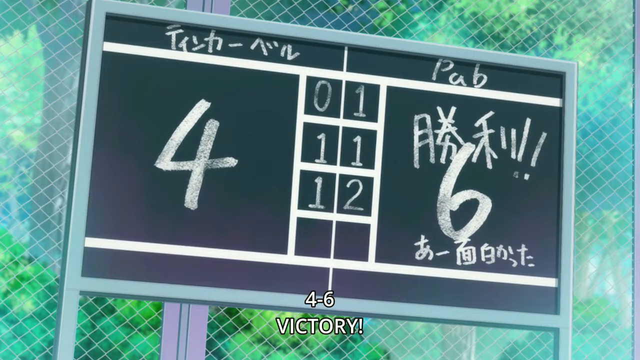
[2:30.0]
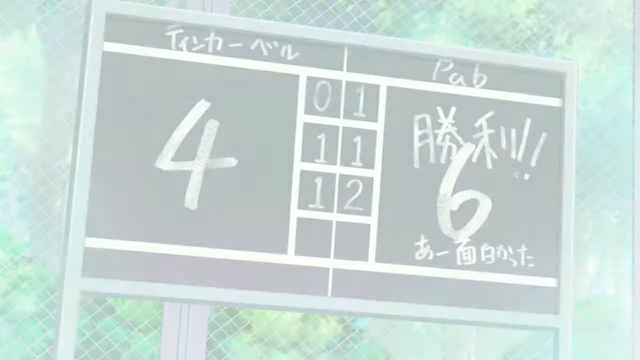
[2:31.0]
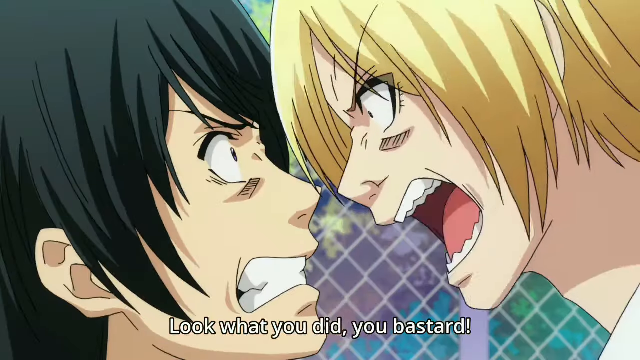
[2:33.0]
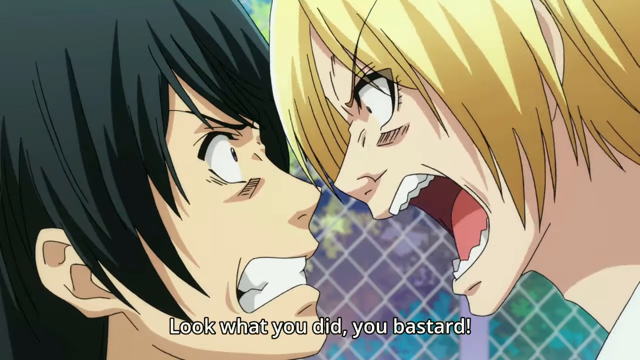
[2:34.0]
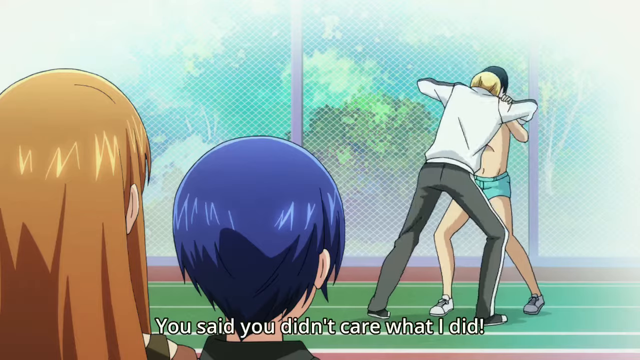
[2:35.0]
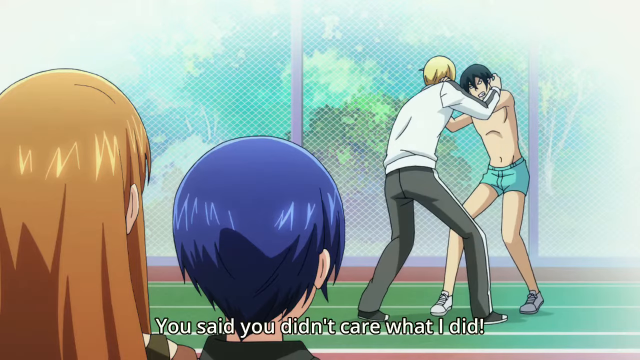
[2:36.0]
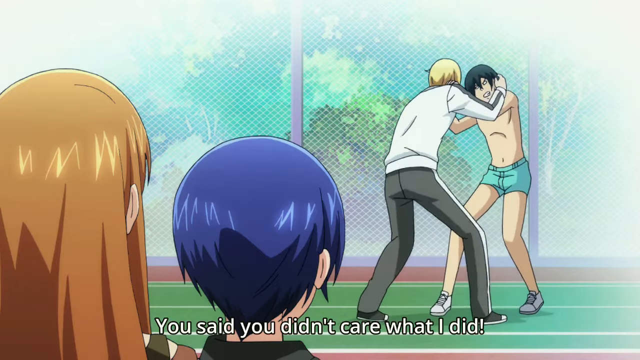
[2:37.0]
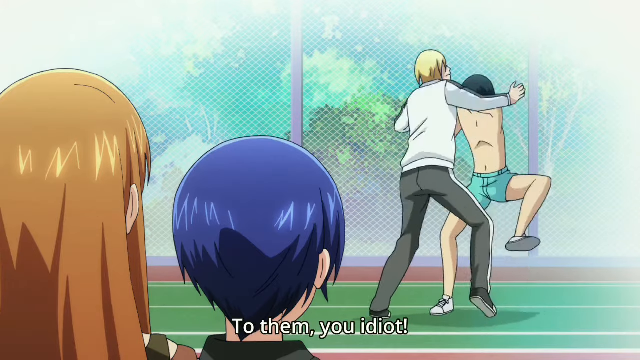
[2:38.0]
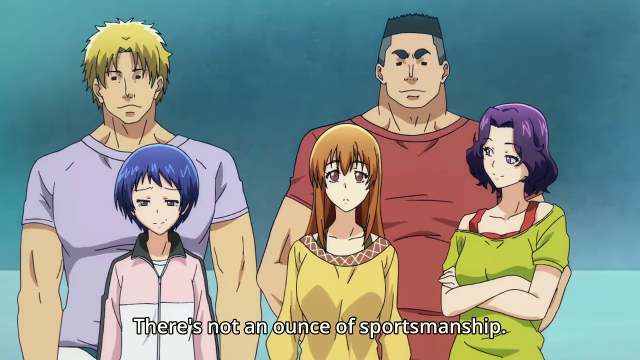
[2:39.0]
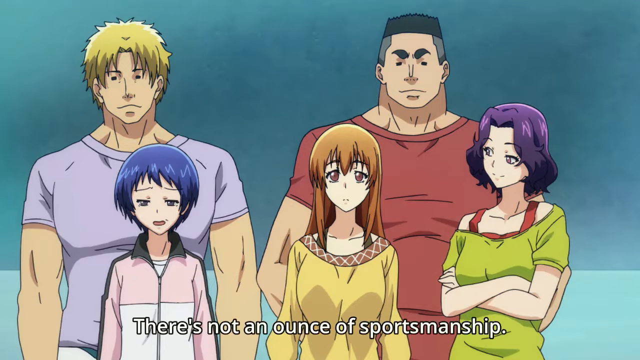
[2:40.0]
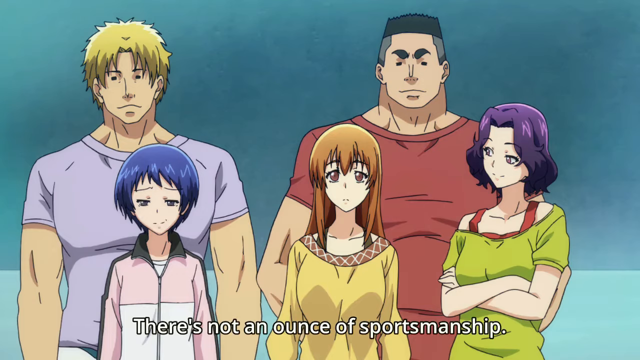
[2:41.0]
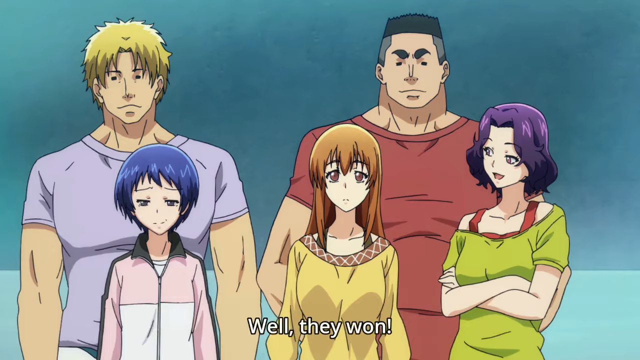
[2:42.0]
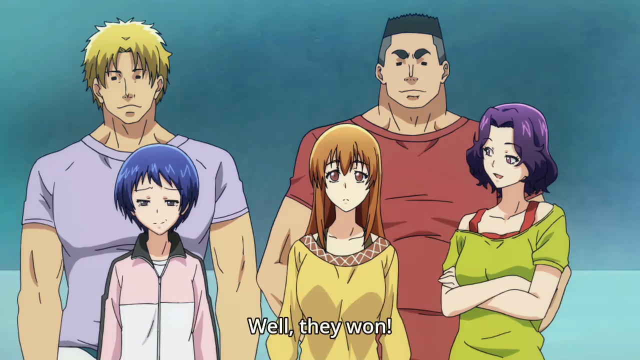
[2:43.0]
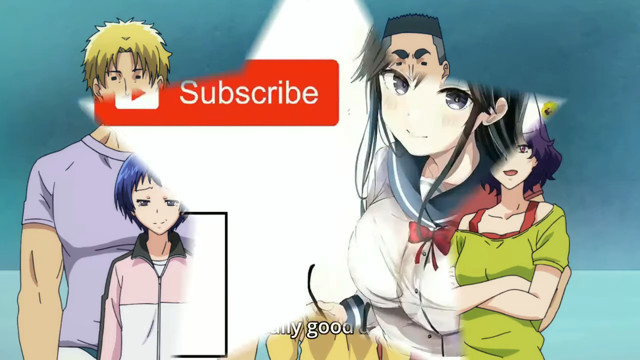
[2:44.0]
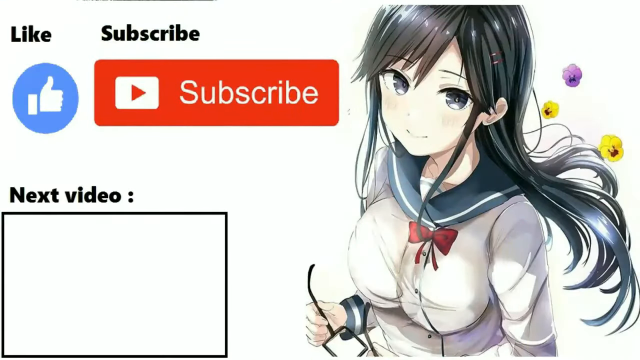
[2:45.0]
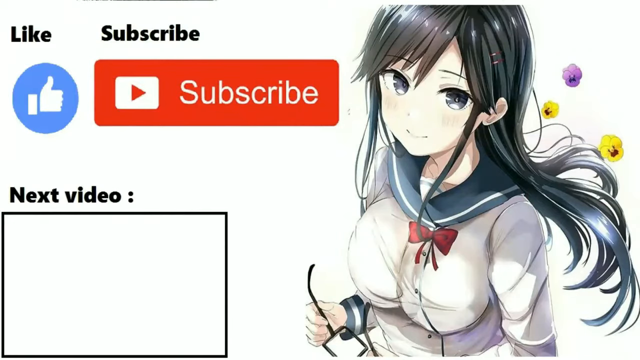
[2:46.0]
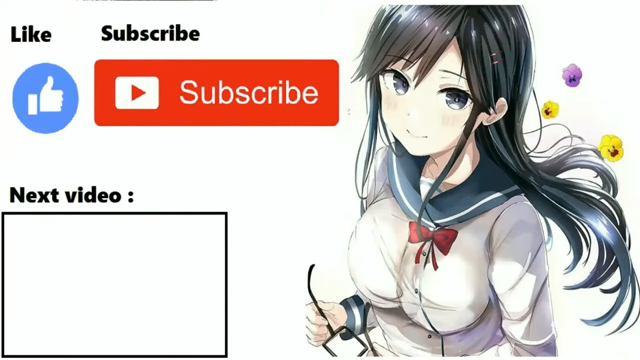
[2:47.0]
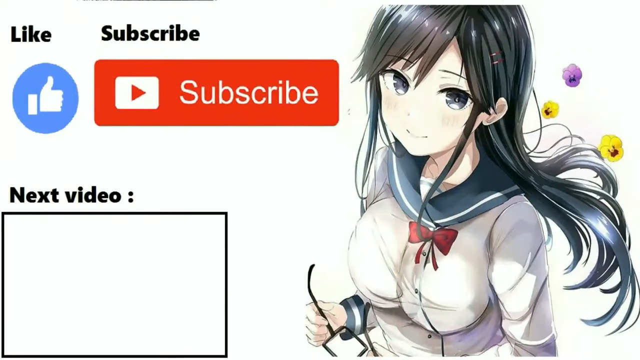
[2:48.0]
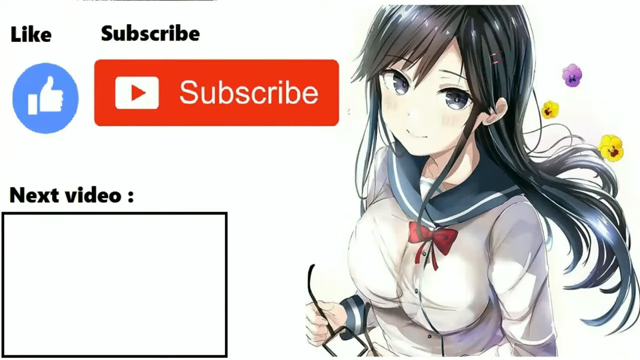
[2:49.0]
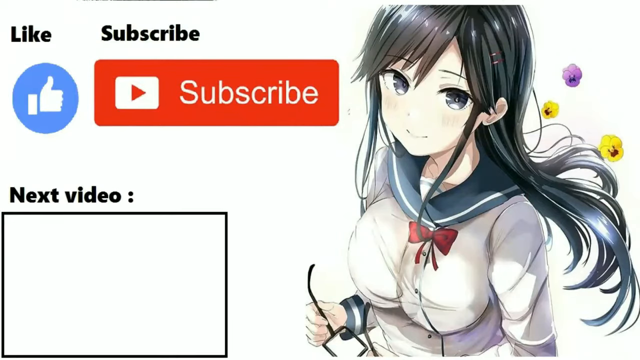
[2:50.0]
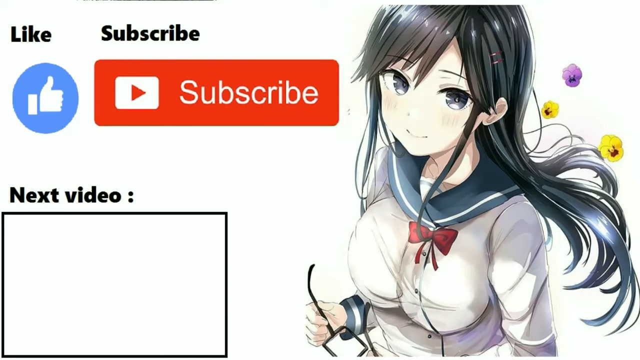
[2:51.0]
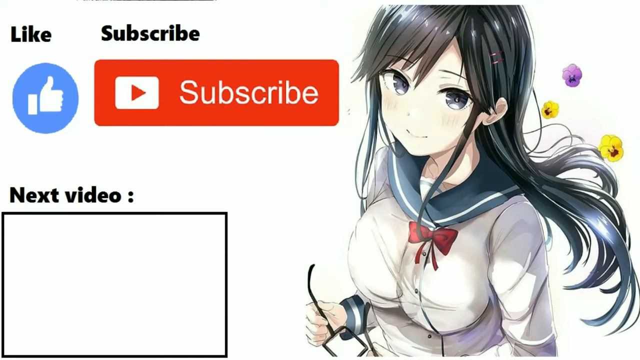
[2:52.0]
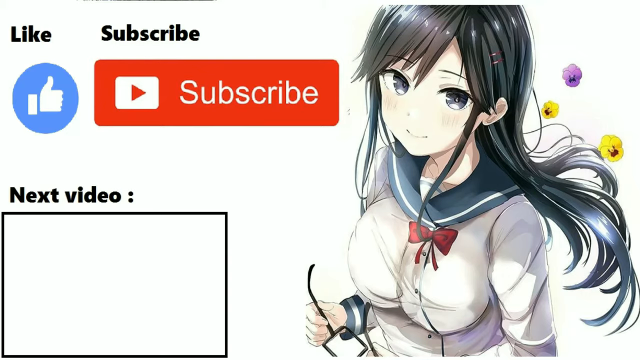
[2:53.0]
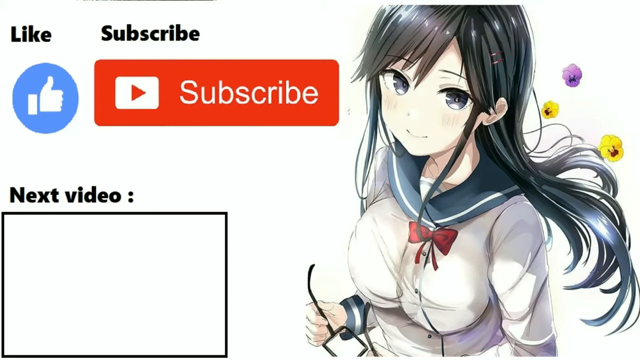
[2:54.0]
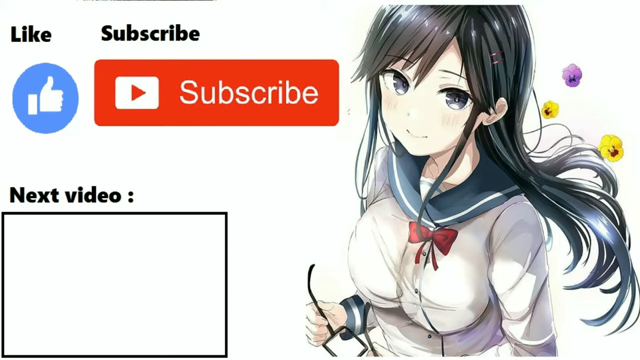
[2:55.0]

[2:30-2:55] In the animated tennis match, a black scoreboard is on the side of the court, with the number four on the left-hand side and the number six on the right-hand side. Underneath are the words "4-6 victory." The scoreboard is in front of a chain link fence. Two people then argue, their heads very close together as they shout at one another. One man has short black hair and the other short blonde hair, and both have hair falling over their faces. The words at the bottom of the screen say "look what you did you bastard" as the blonde one shouts. They start to fight and wrestle on the tennis court while other people watch. Five people are saying "there's not an ounce of sportsmanship": three smaller people stand in the front in a line and two really large men, very tall and very muscly, stand behind them, and they all seem to be watching the two players fight. The video then moves to a new screen with the words "and subscribe," the Facebook like icon, the YouTube subscribe button and an animated figure of a girl with long black hair.